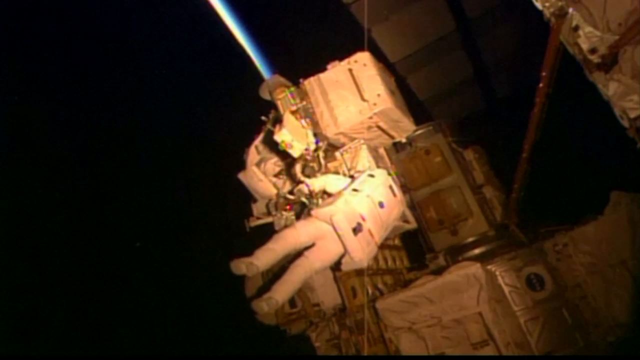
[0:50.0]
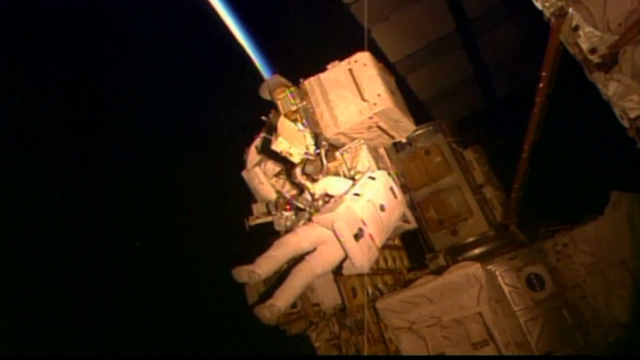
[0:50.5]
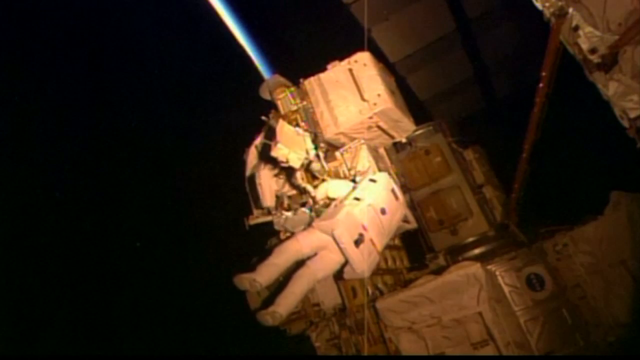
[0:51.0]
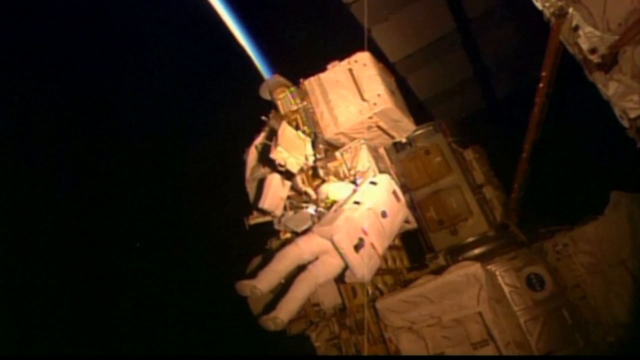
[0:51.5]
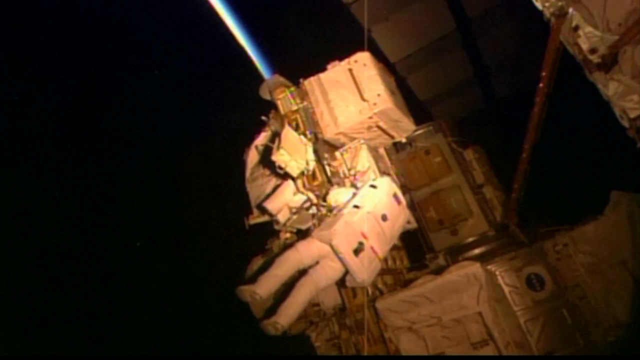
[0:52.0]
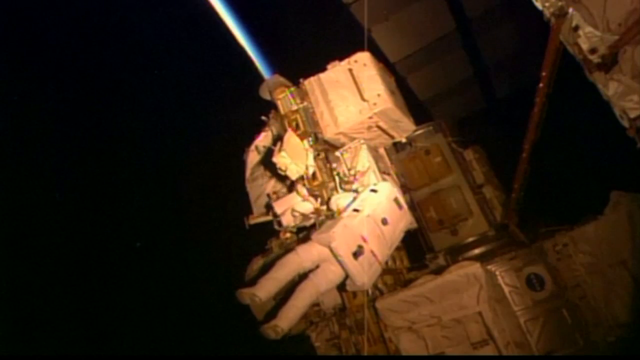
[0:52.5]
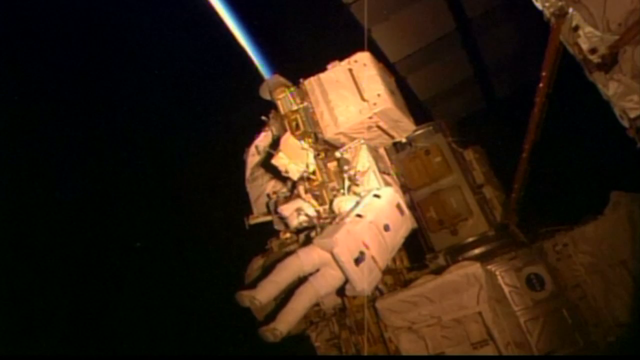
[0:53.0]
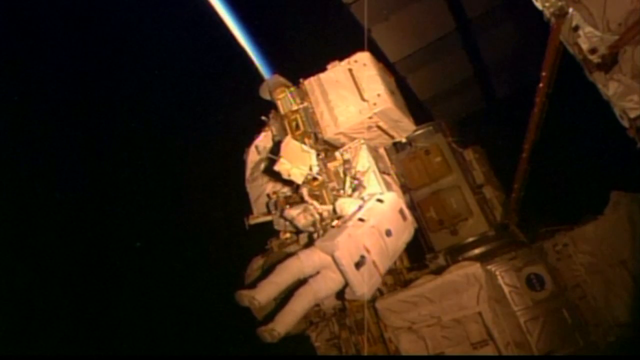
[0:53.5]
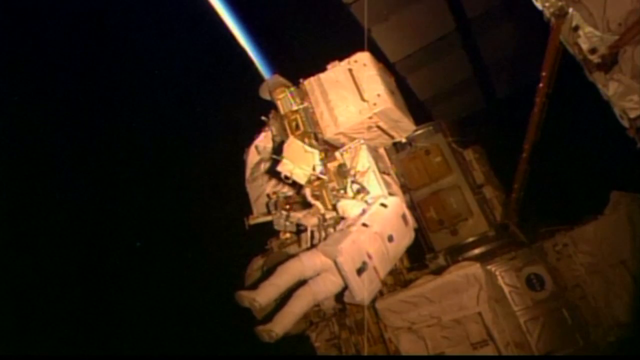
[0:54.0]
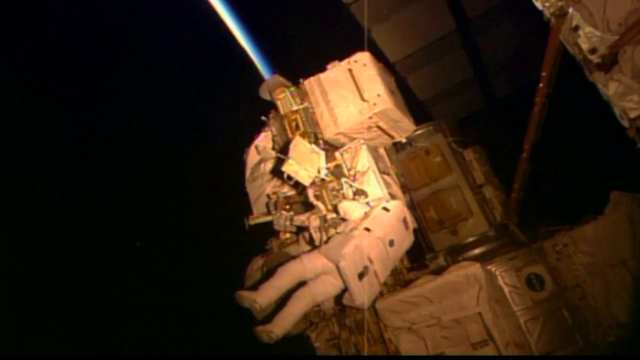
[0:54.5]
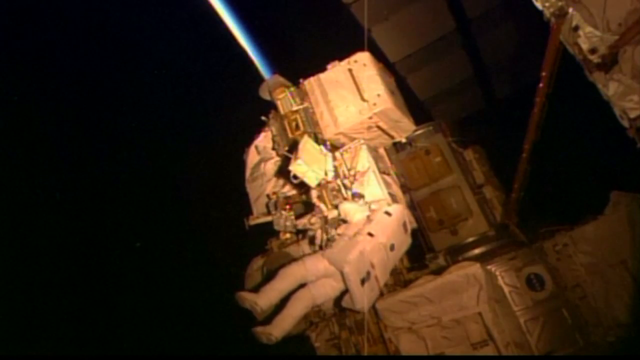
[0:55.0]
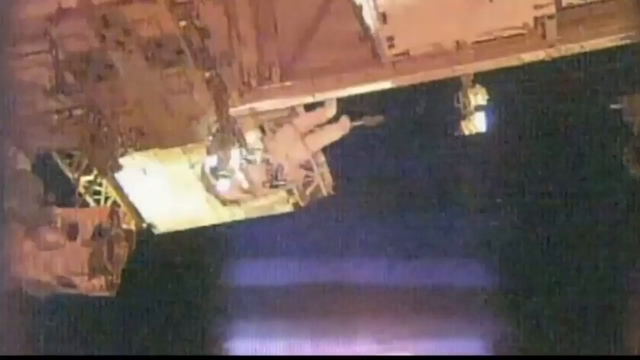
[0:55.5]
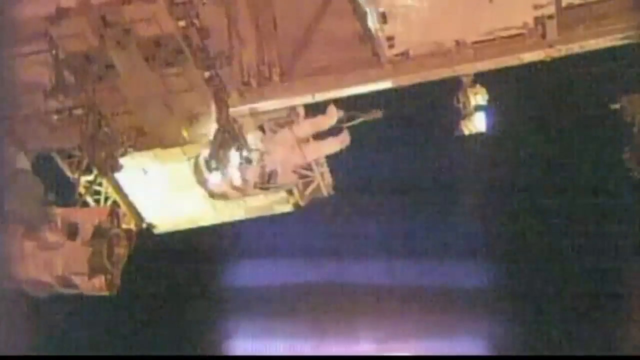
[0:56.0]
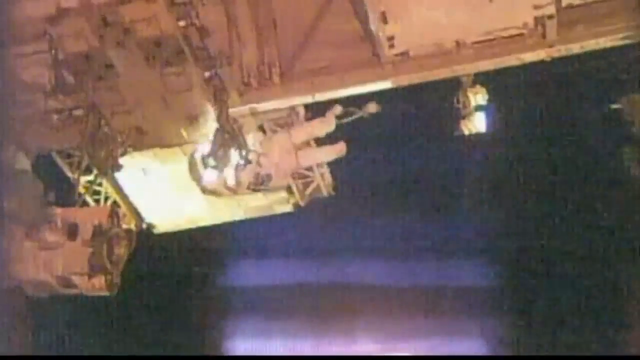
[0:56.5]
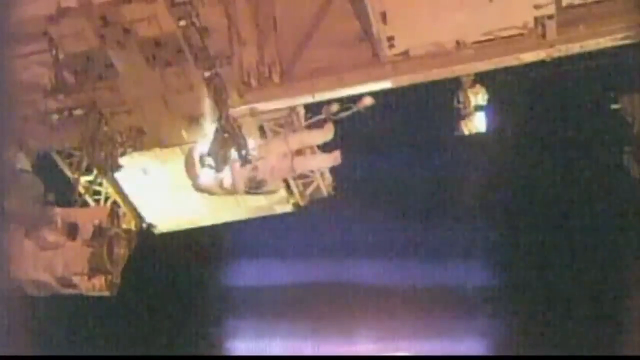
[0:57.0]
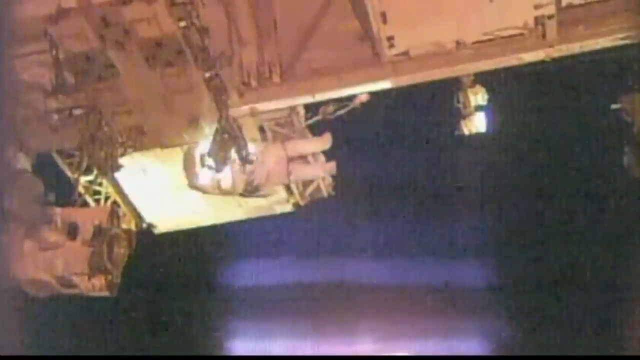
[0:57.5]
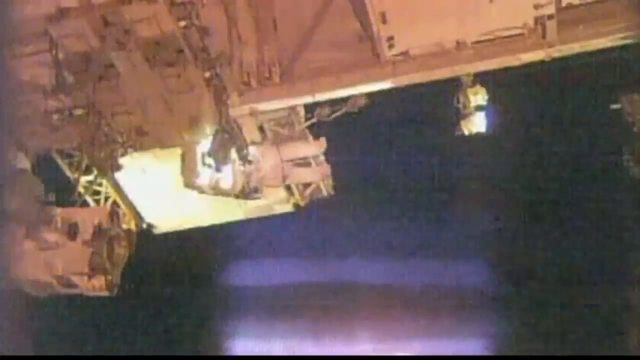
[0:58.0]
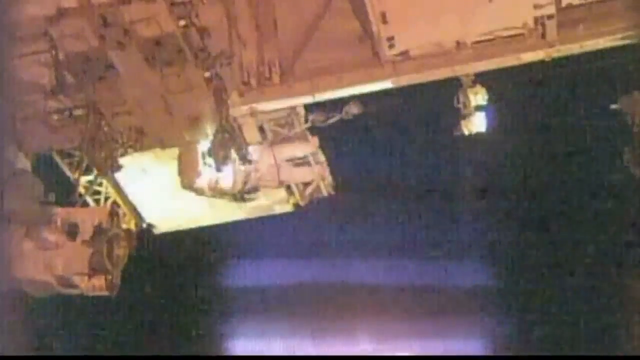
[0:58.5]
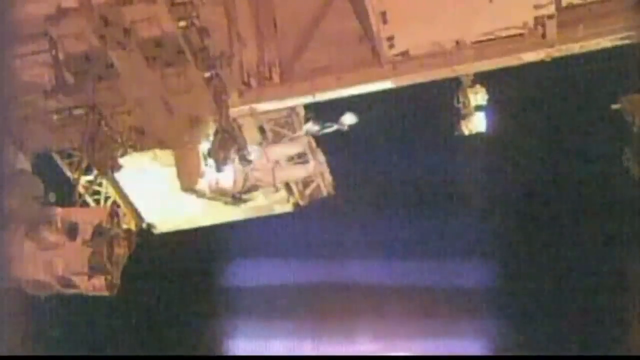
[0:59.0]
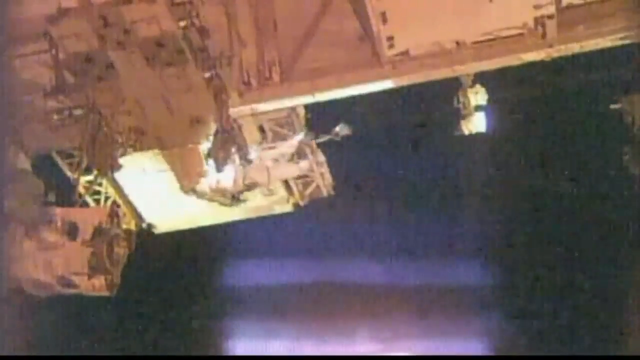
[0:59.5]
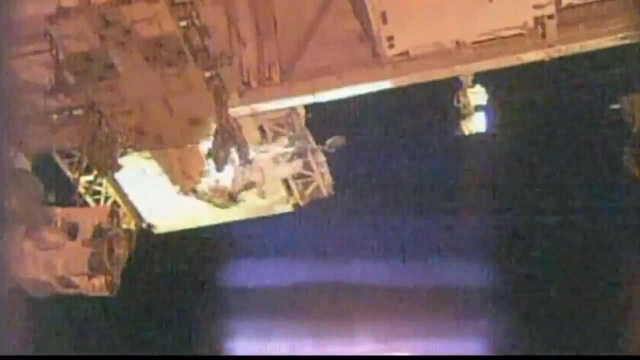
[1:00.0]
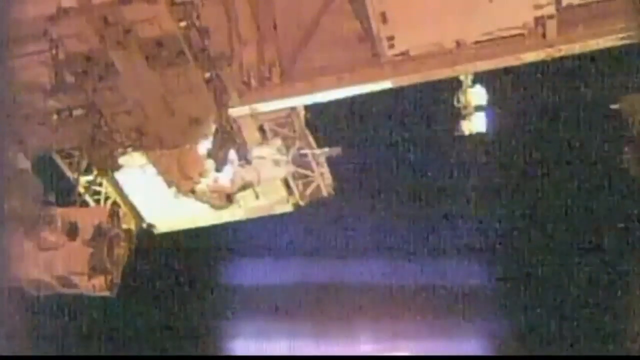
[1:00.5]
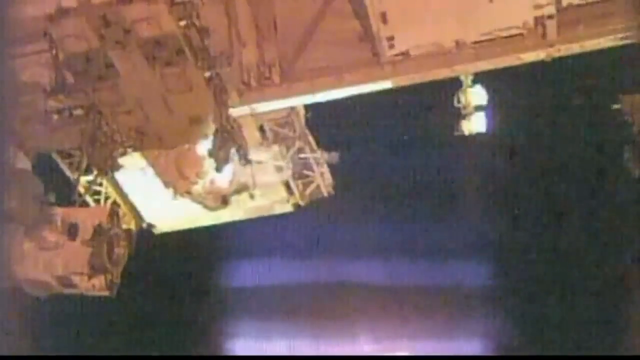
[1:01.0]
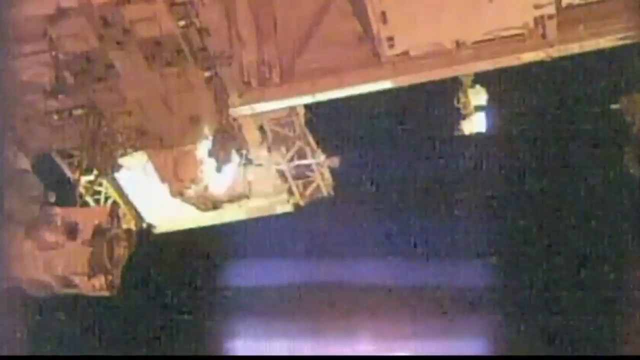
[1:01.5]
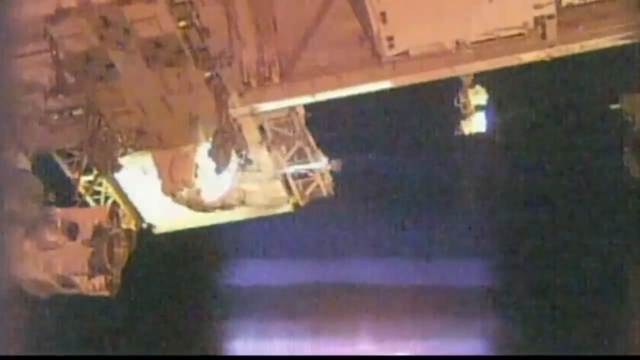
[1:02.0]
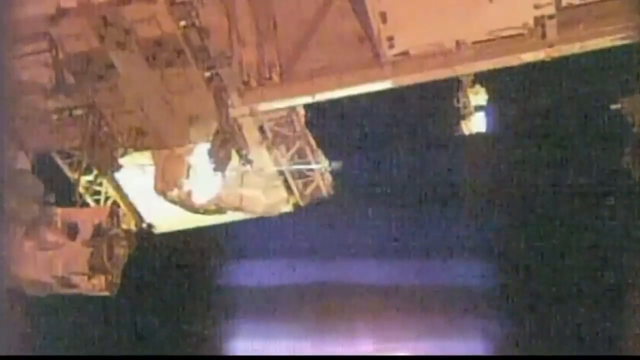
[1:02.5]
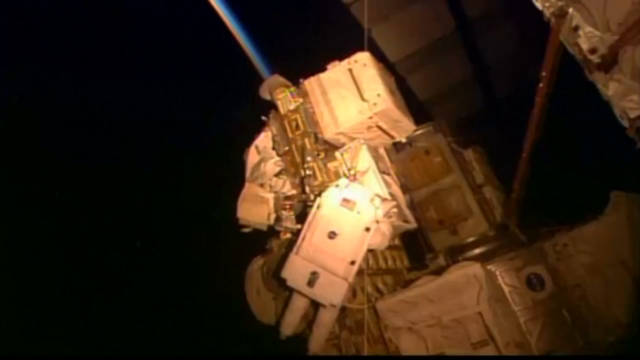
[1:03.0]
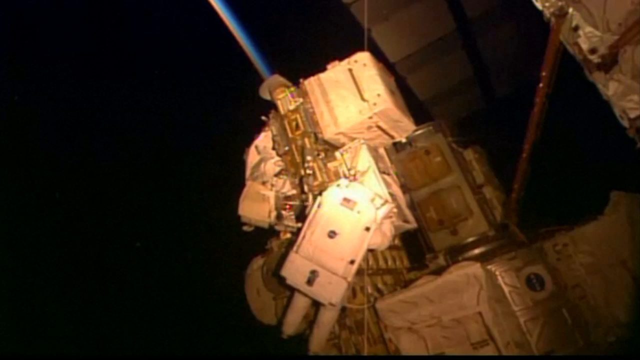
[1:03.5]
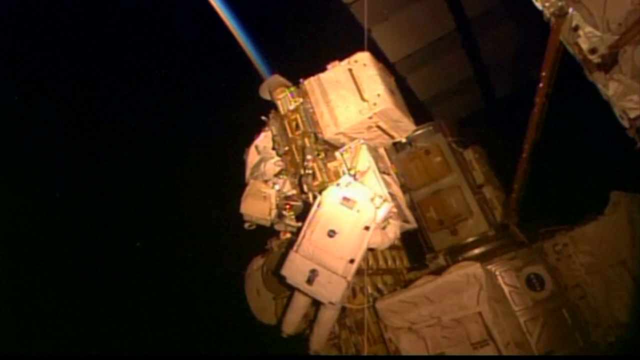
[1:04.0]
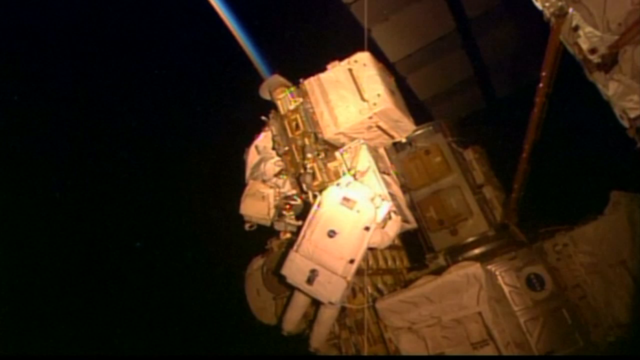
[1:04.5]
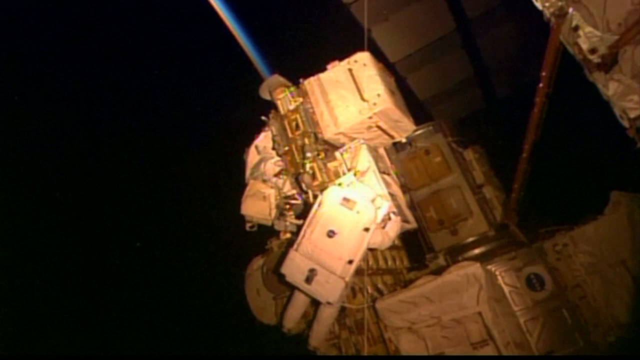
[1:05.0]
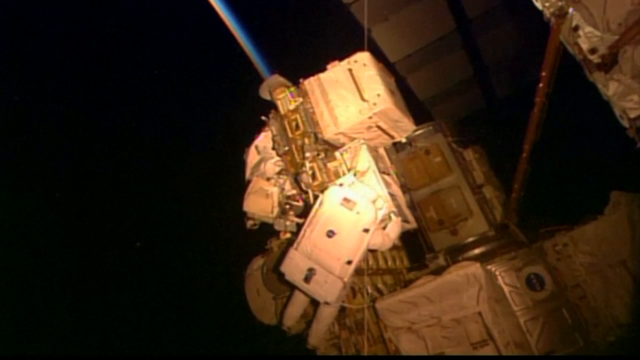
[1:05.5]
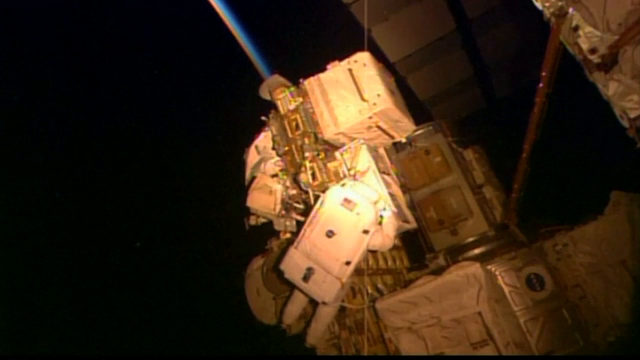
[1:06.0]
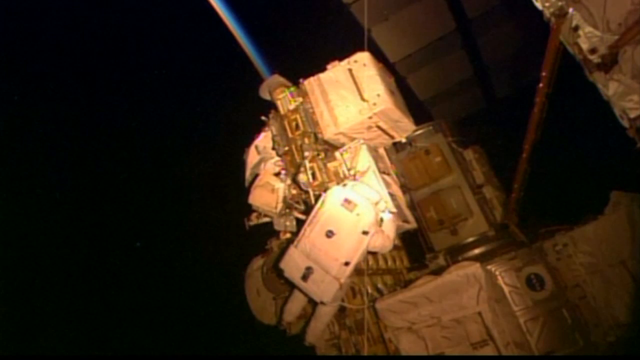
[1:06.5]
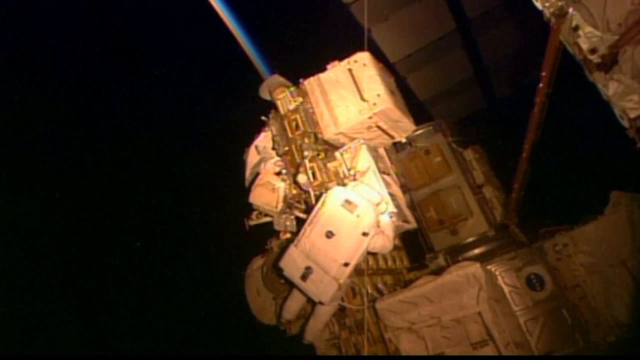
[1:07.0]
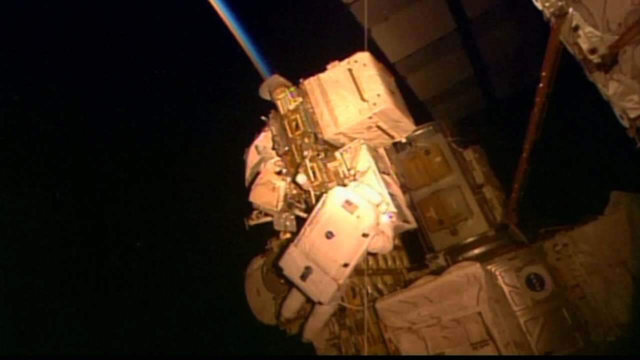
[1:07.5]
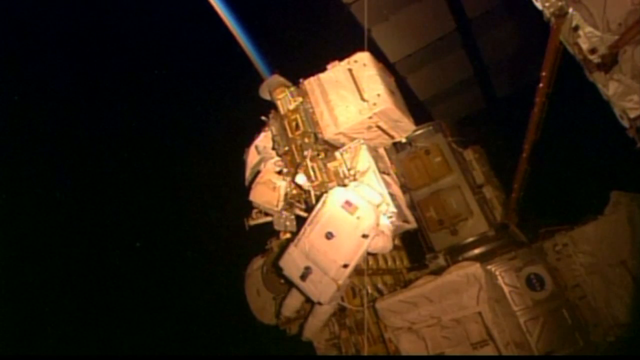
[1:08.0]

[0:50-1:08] An astronaut in a white suit with a white backpack works on a structure in space. His feet face toward the camera and his head faces away. The white structure he is working on is visible on the right-hand side of the screen. There is a panel in front of the astronaut, and his arms are touching it. From the top of the structure to the top of the screen there is an arc of white light with an unclear source. Two white squares attached by cables float aimlessly in front of the astronaut. The scene fades to a different view of the astronaut, in which the white structure takes up the top of the screen, with an arm protruding away from the camera into the right-hand side. The astronaut is in the center of the screen with the back of his body visible, his feet pointing to the right-hand side of the screen and his head toward the left. A bar of metal obscures part of the view of his back. Two objects swing into view down from the top of the screen while the astronaut seems to float aimlessly, rotating slightly clockwise.